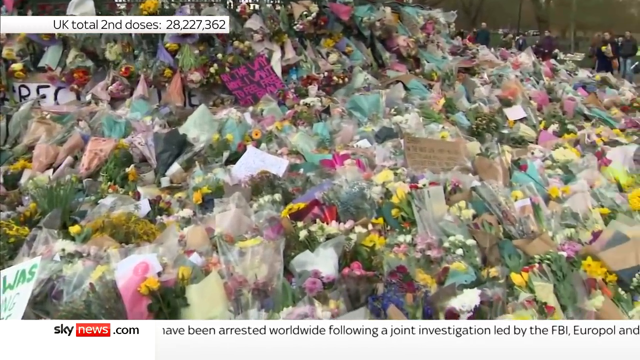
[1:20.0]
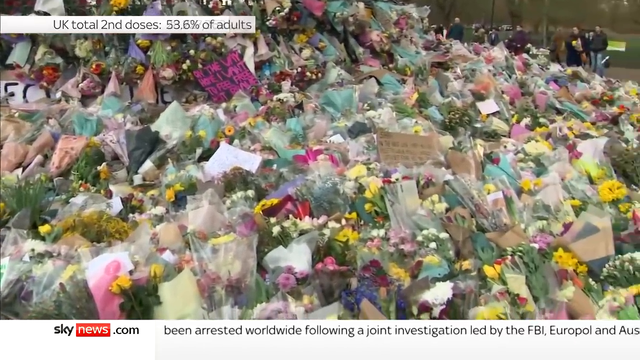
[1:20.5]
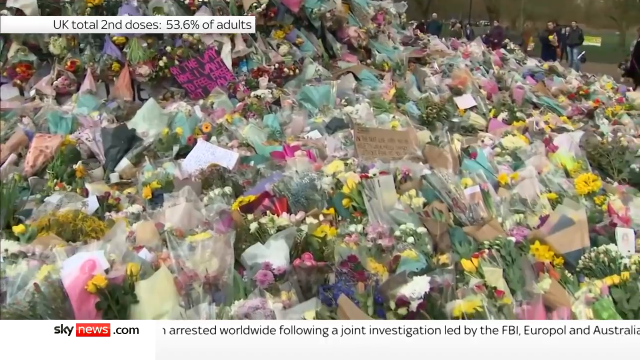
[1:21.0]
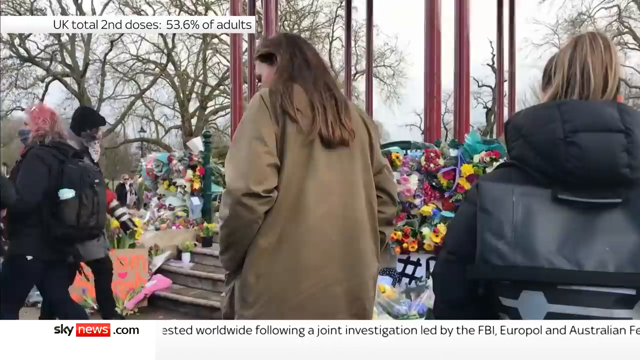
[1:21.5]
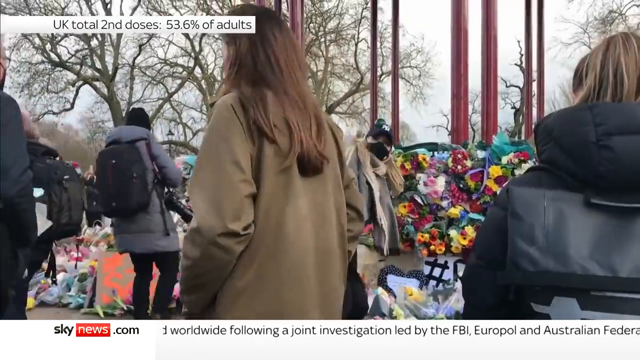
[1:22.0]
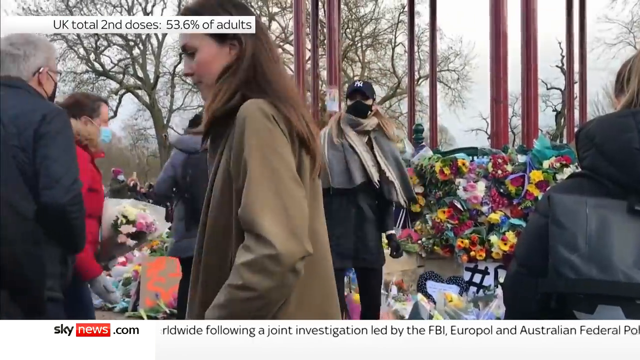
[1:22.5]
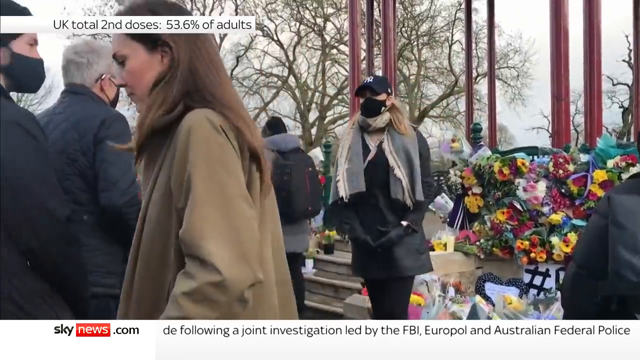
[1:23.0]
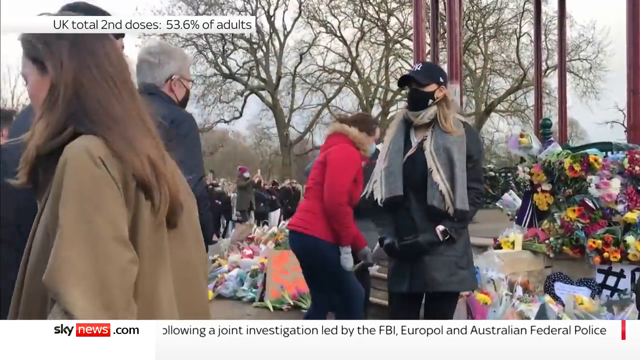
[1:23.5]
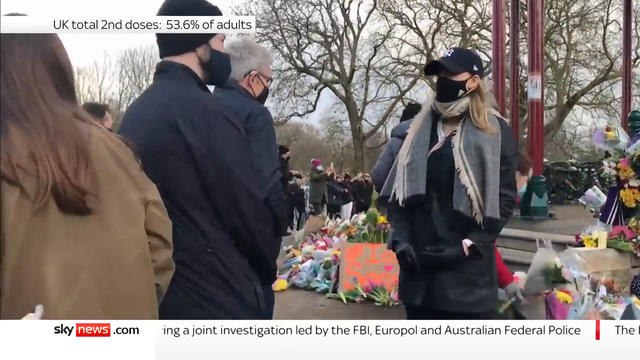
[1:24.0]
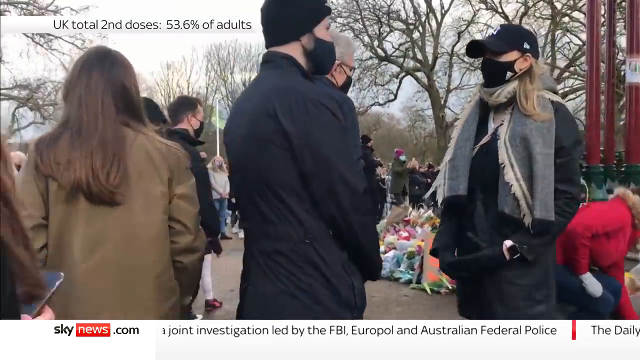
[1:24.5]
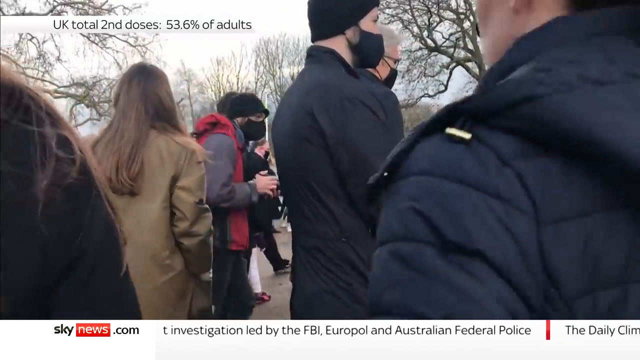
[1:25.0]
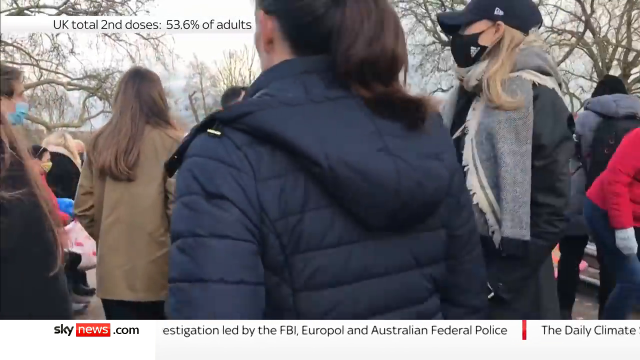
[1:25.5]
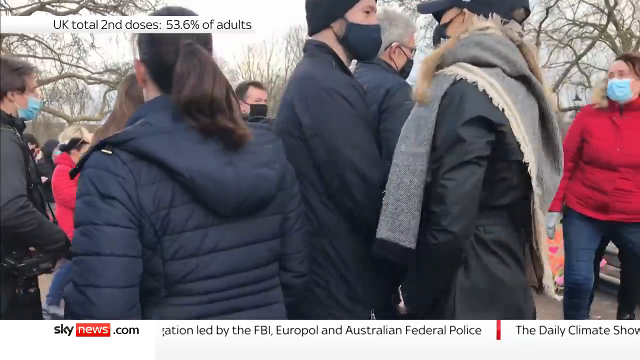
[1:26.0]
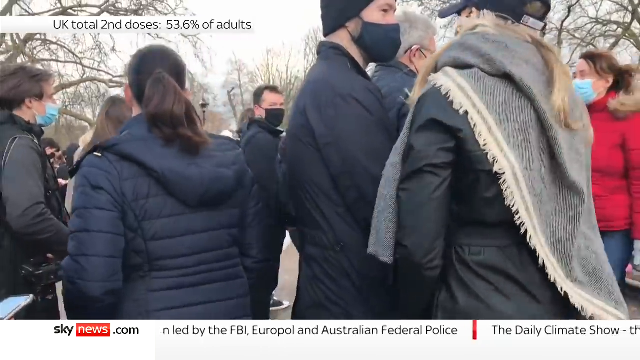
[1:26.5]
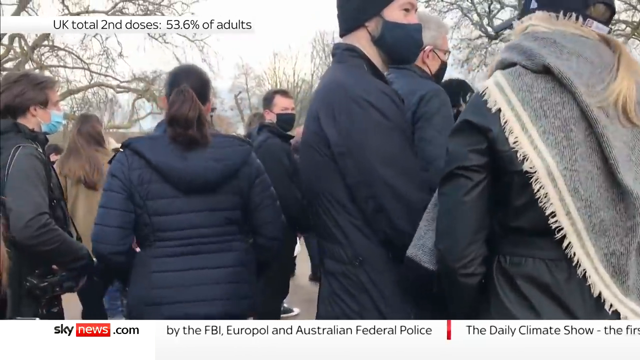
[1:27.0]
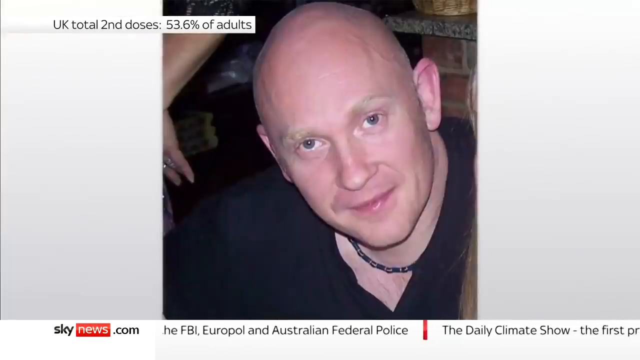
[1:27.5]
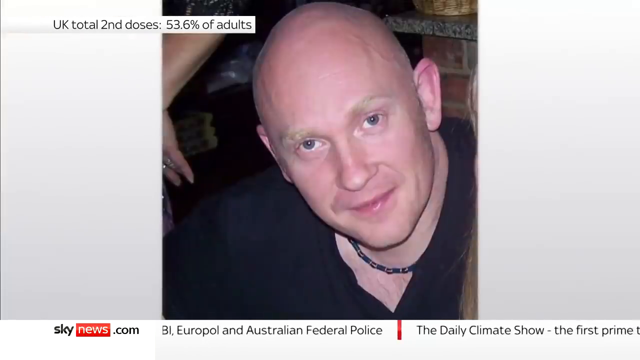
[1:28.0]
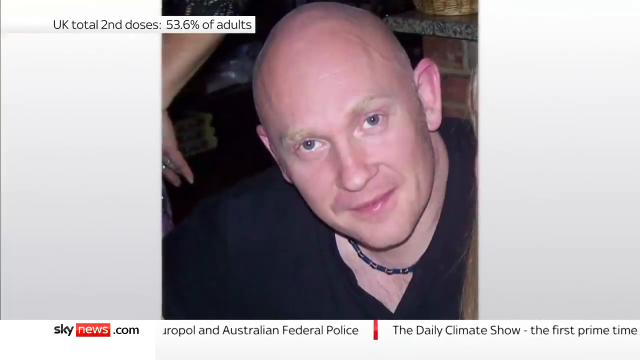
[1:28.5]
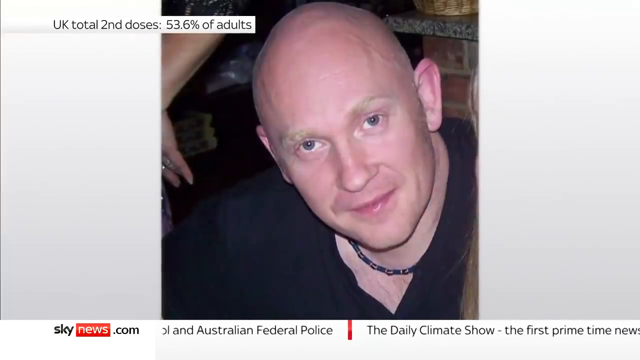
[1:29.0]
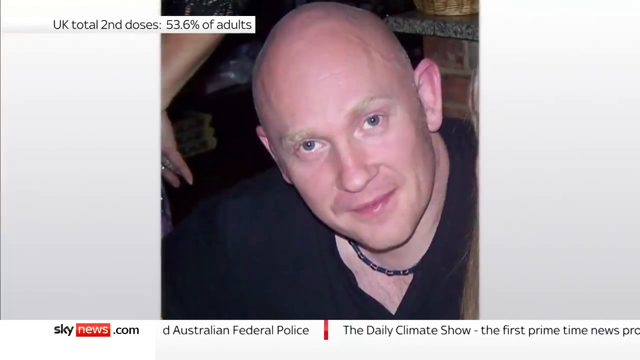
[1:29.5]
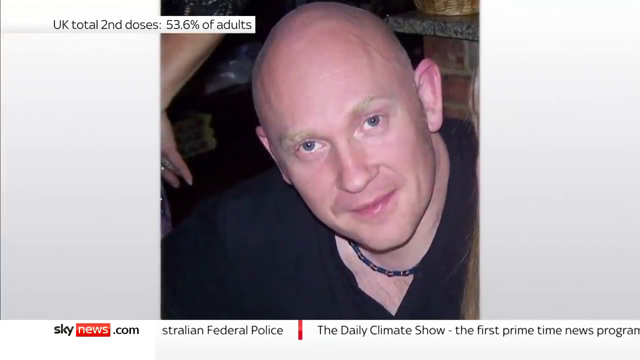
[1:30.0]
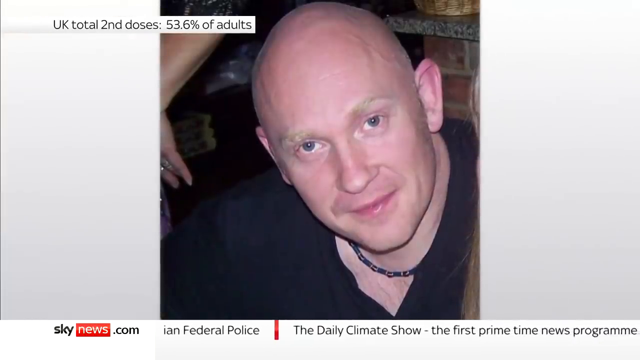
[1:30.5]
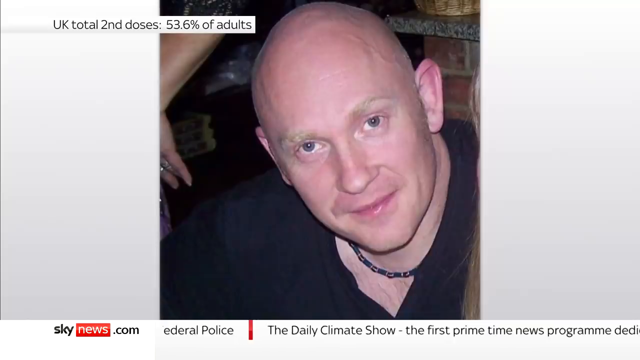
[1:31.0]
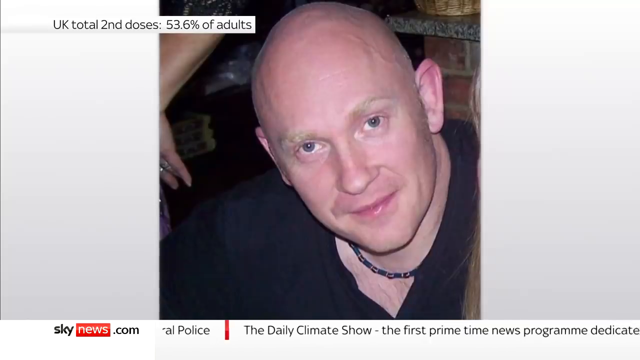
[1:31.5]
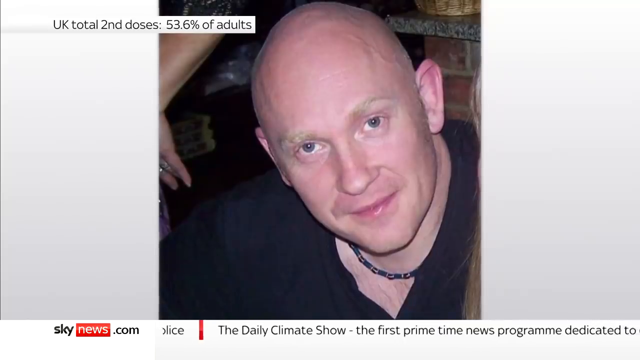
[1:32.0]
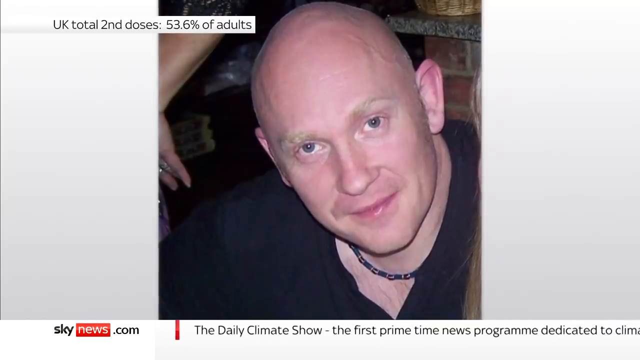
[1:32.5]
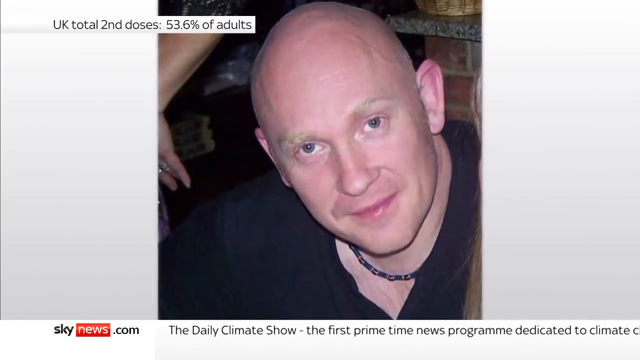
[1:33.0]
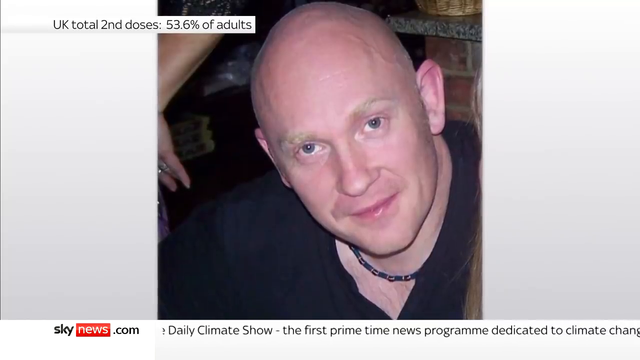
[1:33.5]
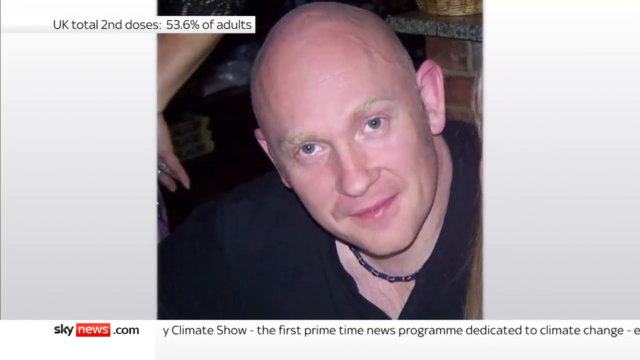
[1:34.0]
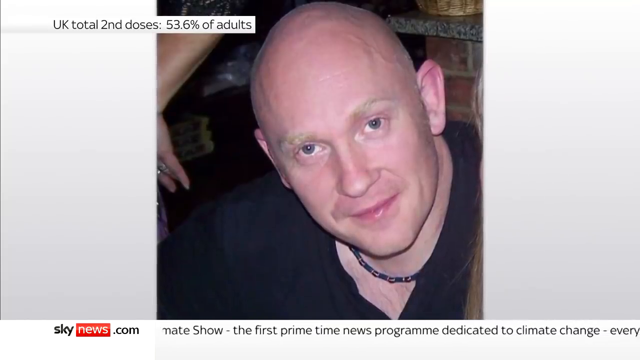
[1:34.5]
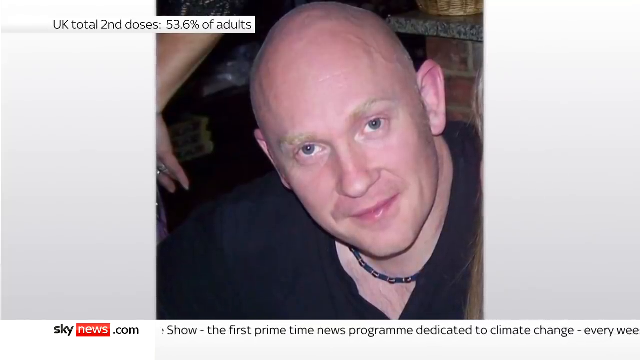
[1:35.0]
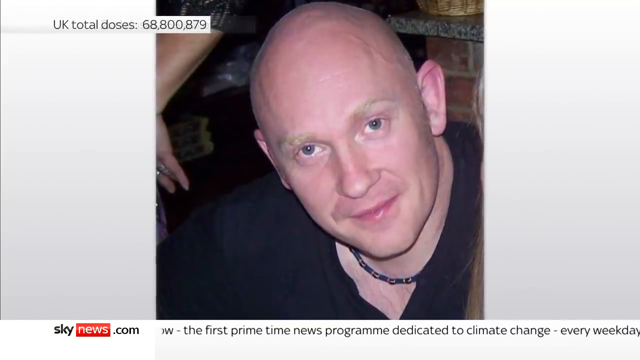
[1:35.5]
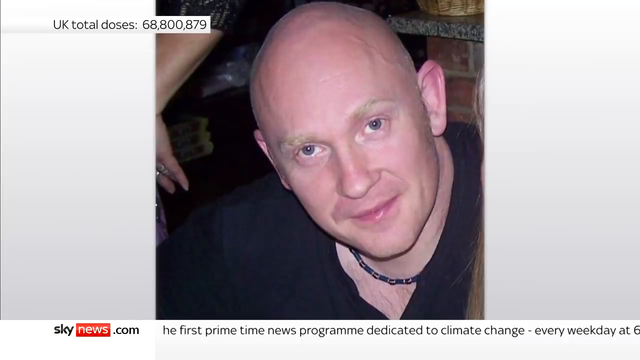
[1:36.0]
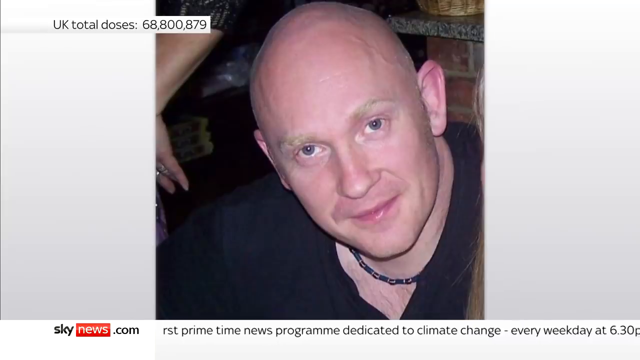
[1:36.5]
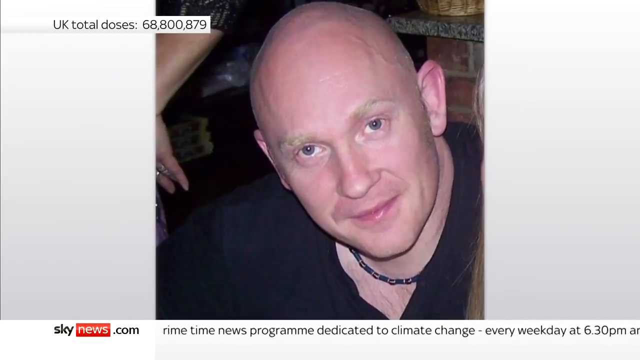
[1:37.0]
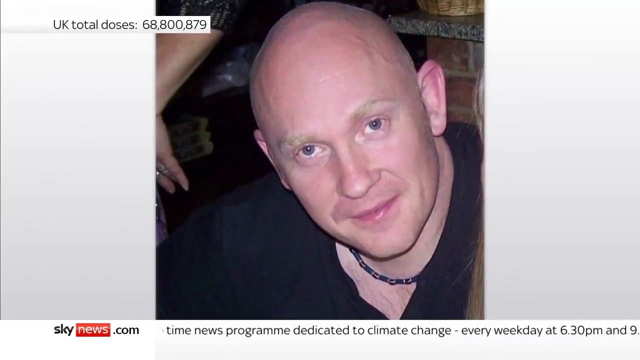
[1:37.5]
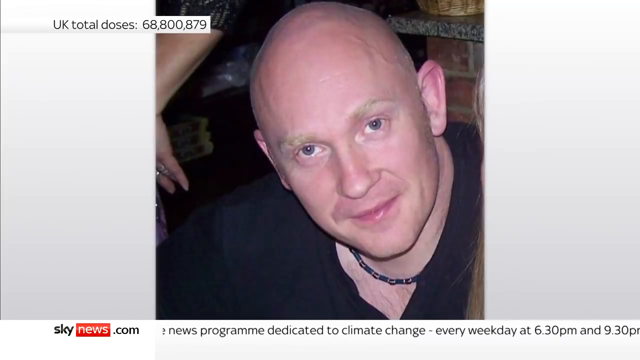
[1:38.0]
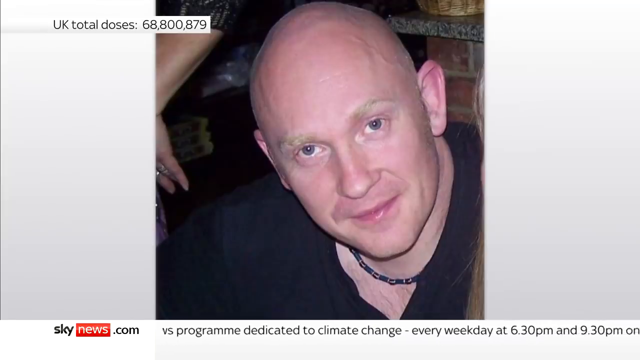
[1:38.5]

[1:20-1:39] Hundreds of flowers are all around as people come in, and it looks cold outside. Faces of people, seemingly missing, are shown, including a bald man with blue eyes, no beard, who looks to be maybe in his 30s or 40s. The scene appears to be some sort of vigil or remembrance gathering with tons of signs. People come to take pictures and drop off flowers.